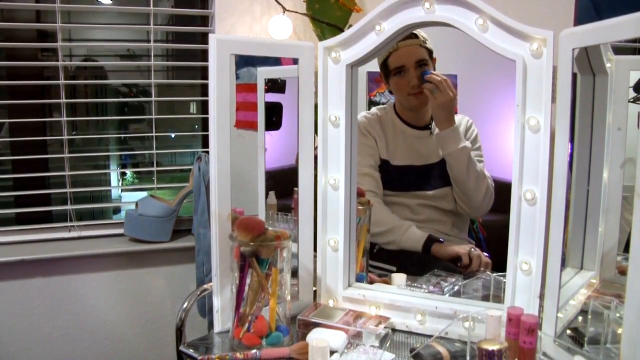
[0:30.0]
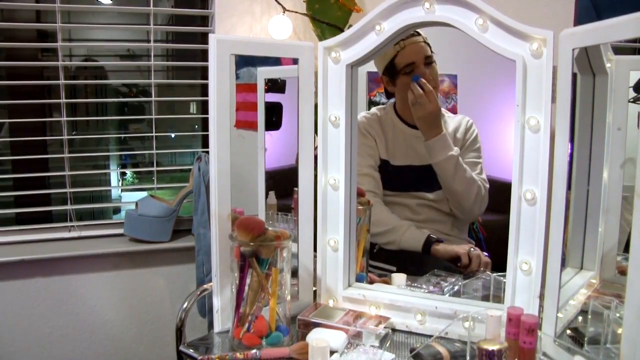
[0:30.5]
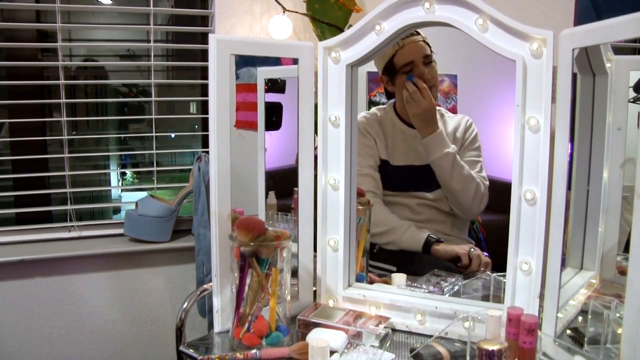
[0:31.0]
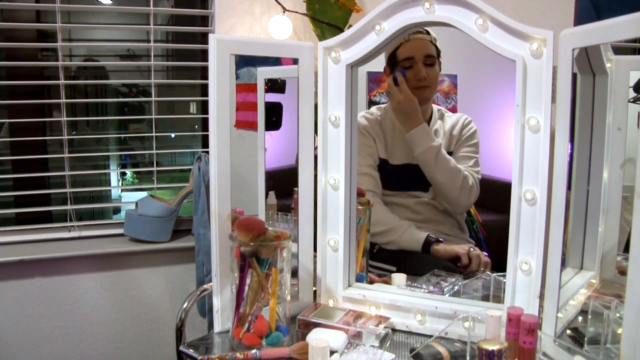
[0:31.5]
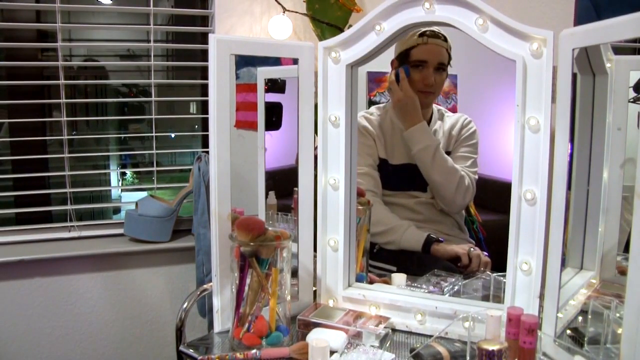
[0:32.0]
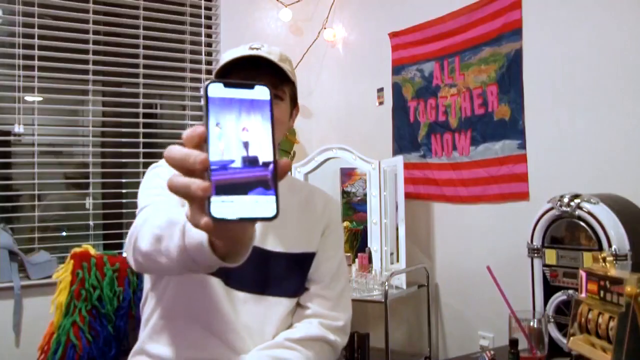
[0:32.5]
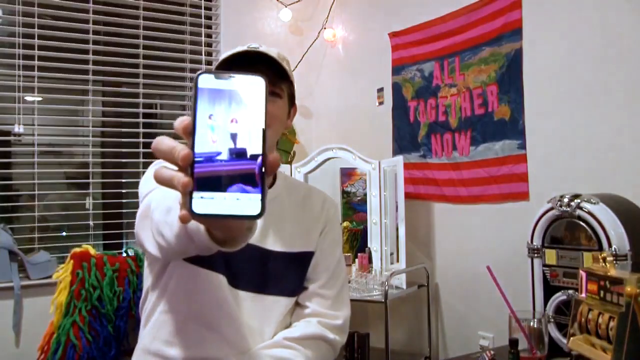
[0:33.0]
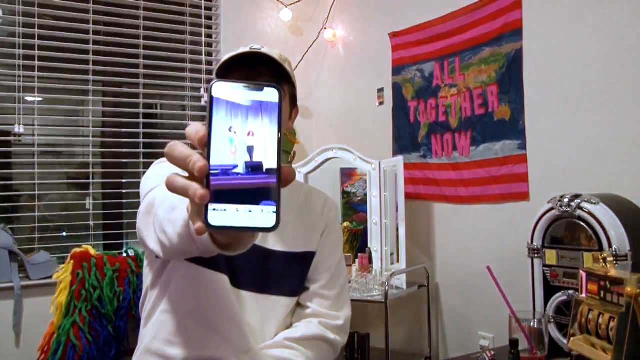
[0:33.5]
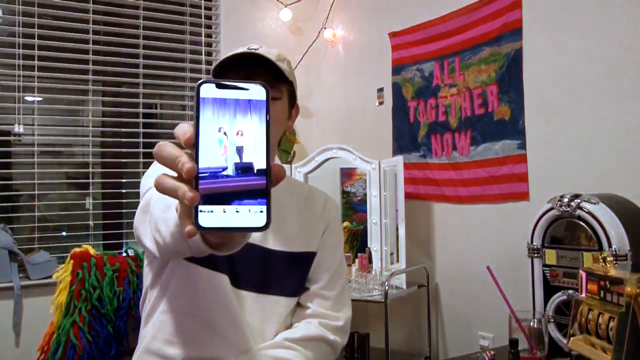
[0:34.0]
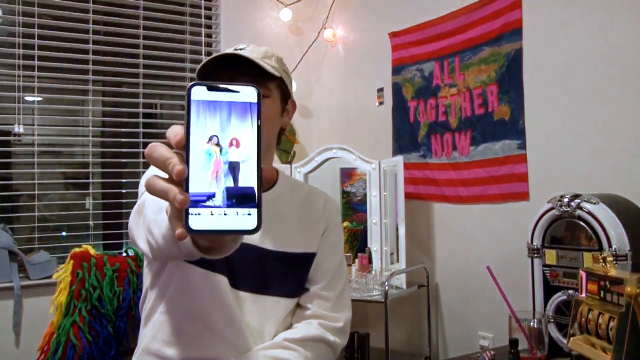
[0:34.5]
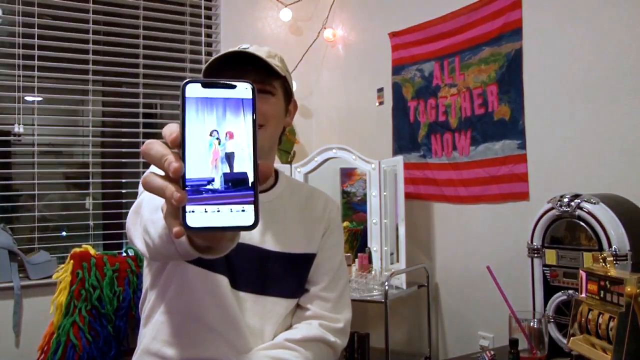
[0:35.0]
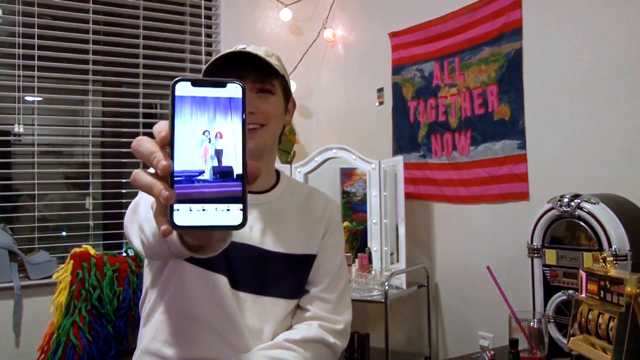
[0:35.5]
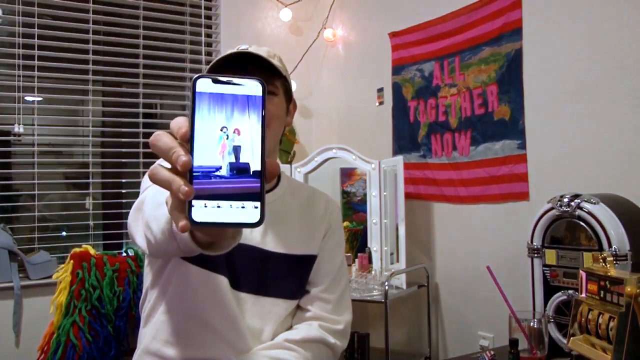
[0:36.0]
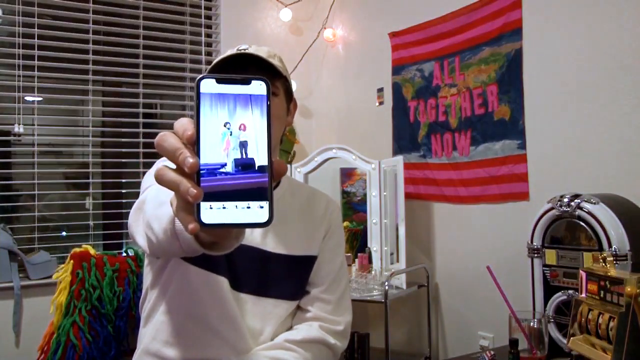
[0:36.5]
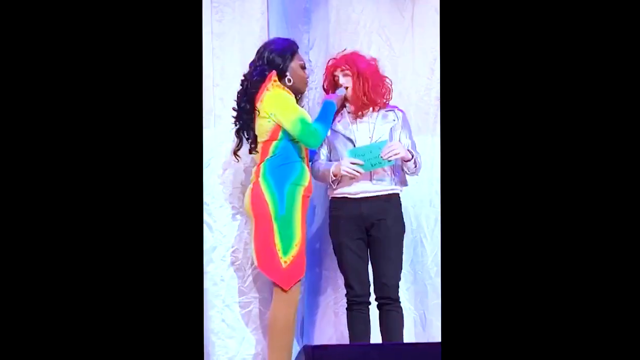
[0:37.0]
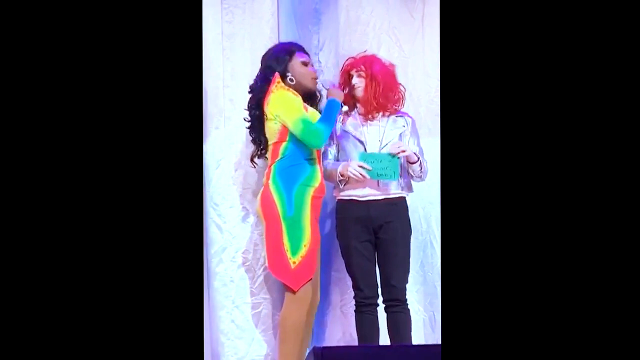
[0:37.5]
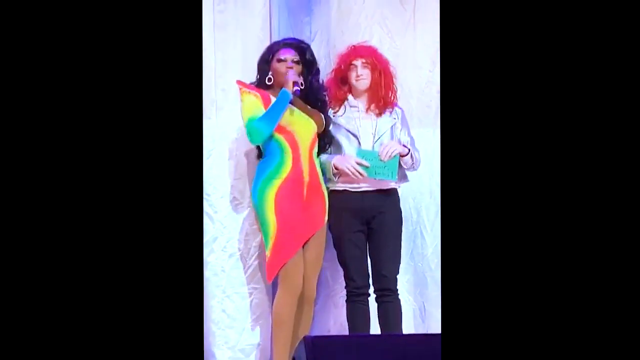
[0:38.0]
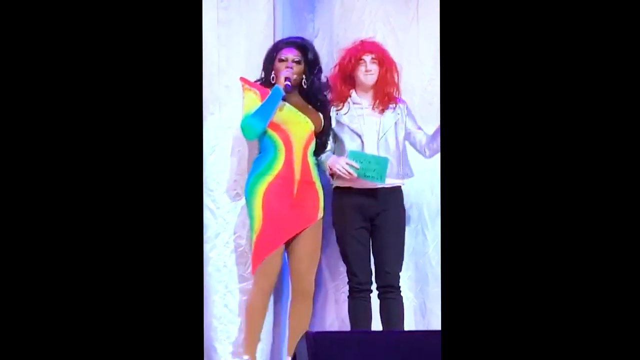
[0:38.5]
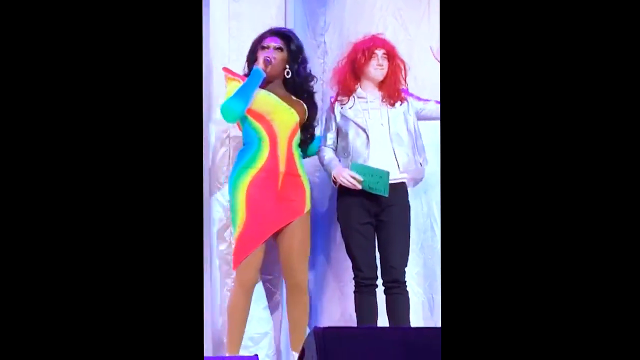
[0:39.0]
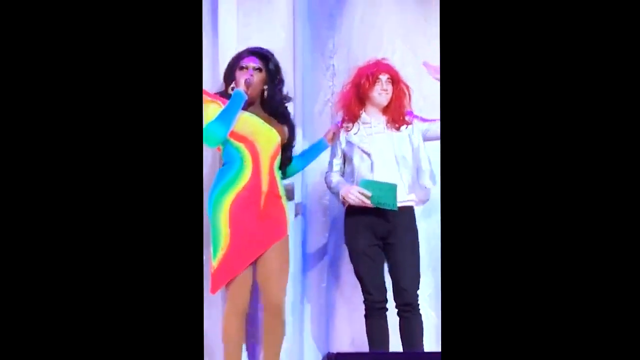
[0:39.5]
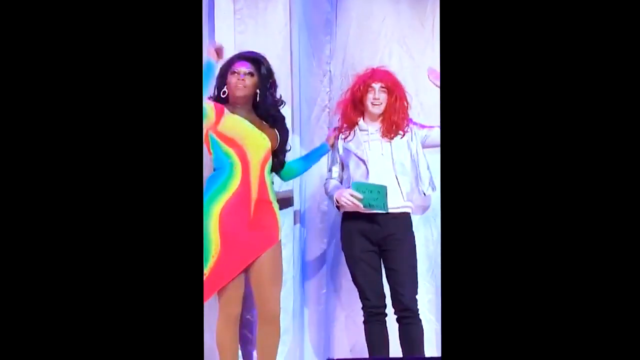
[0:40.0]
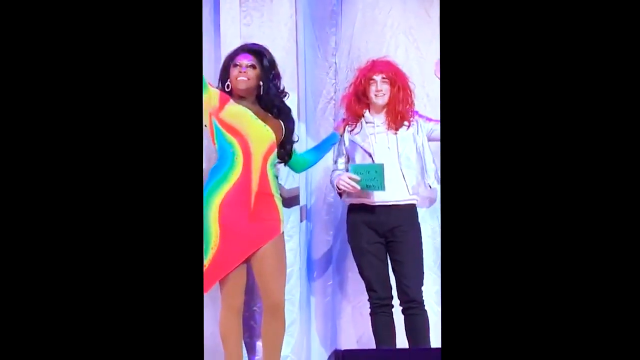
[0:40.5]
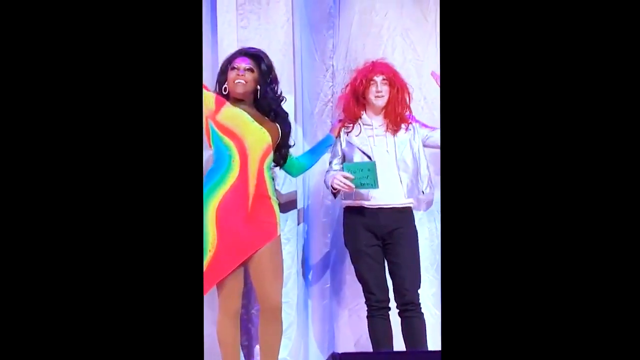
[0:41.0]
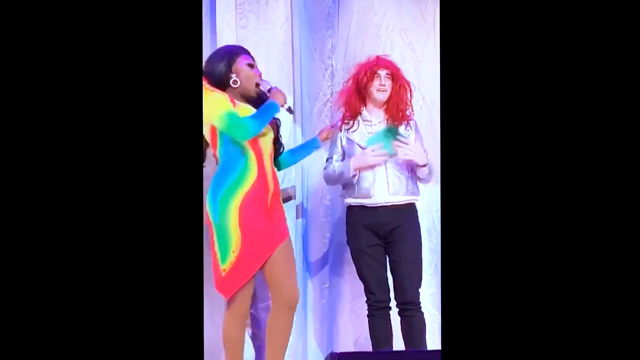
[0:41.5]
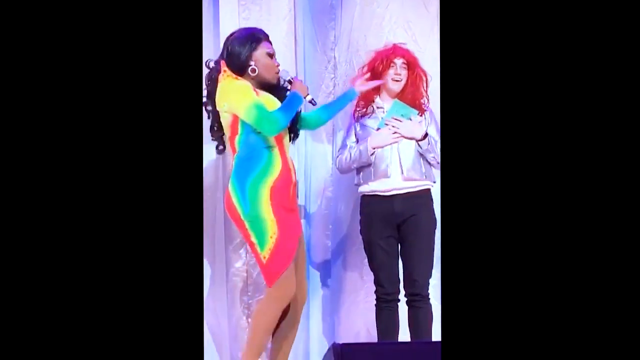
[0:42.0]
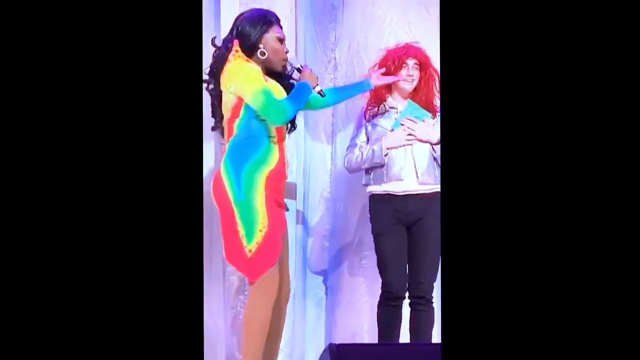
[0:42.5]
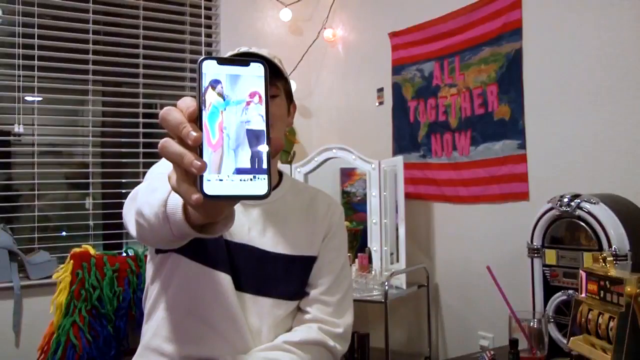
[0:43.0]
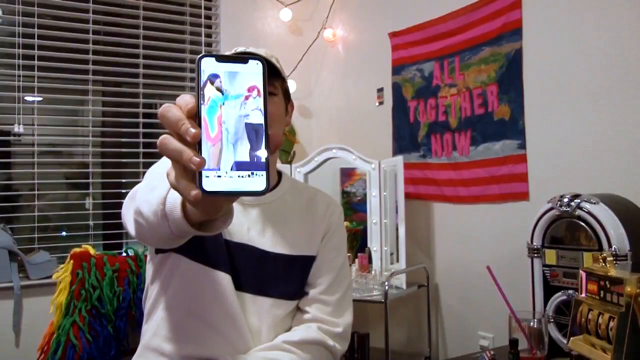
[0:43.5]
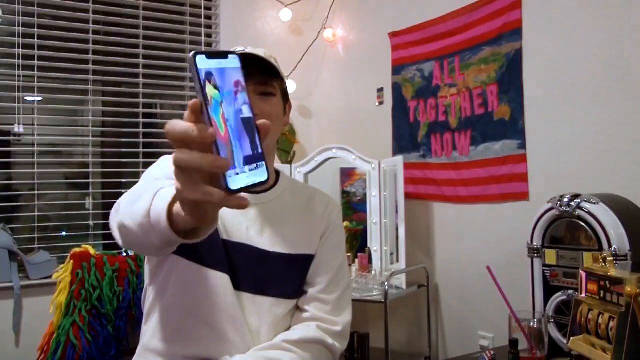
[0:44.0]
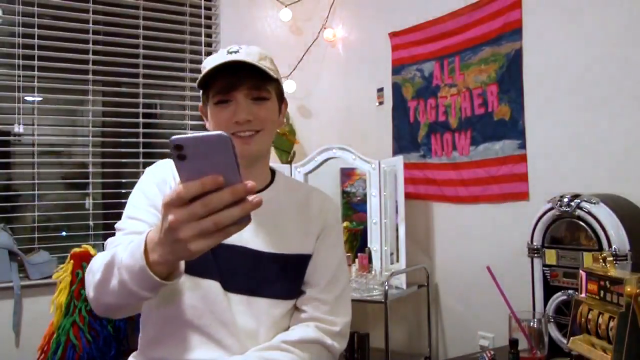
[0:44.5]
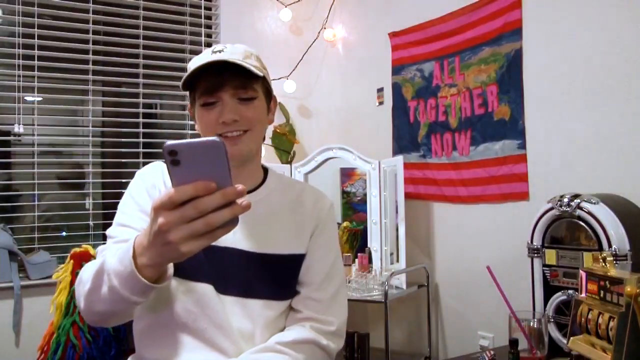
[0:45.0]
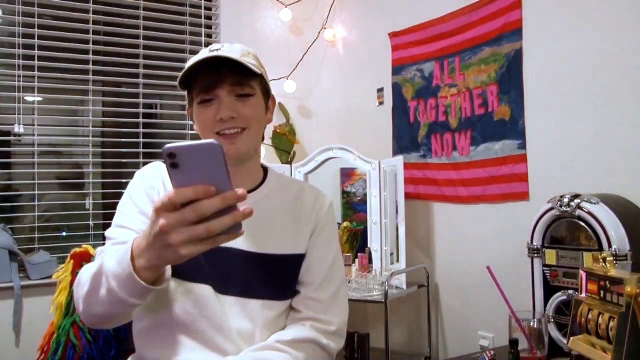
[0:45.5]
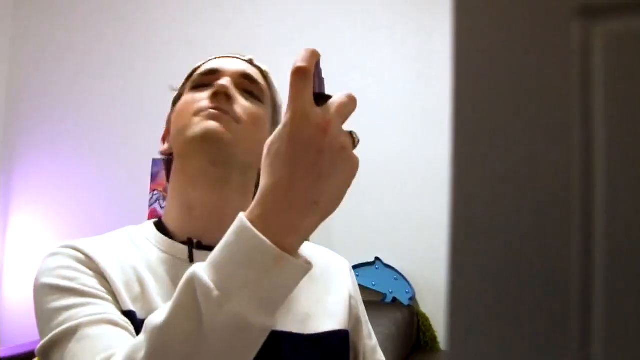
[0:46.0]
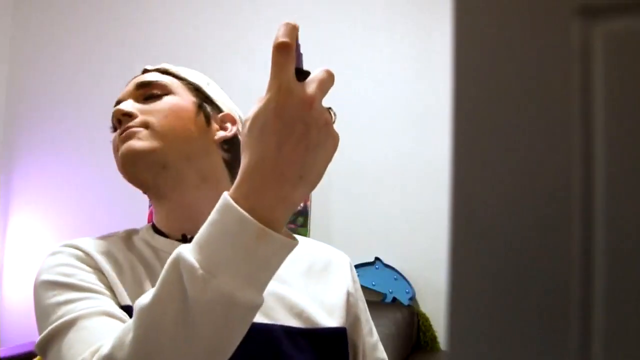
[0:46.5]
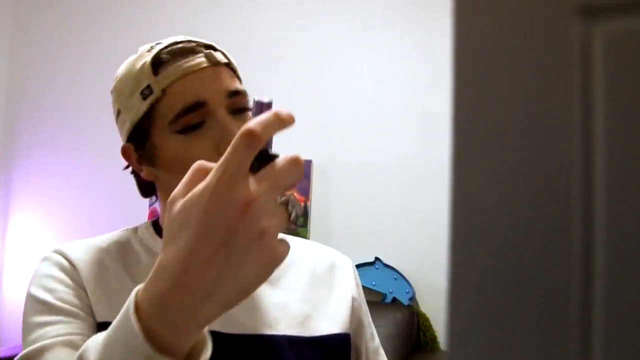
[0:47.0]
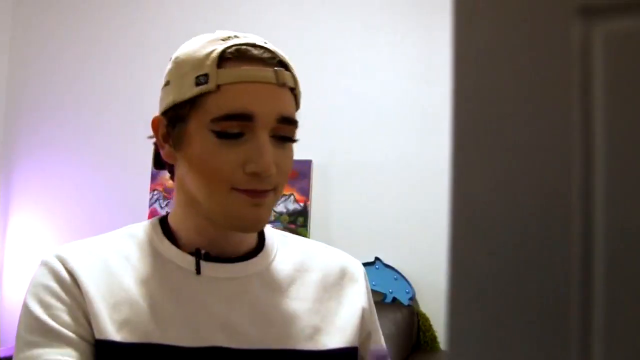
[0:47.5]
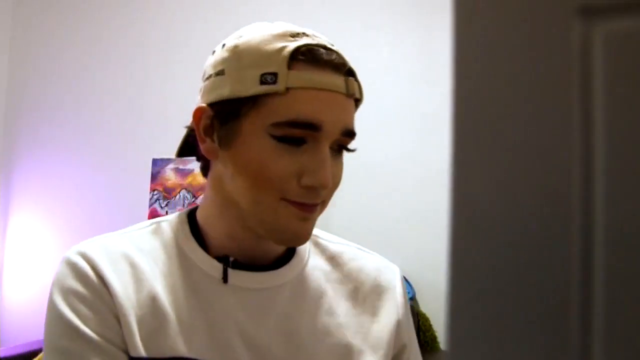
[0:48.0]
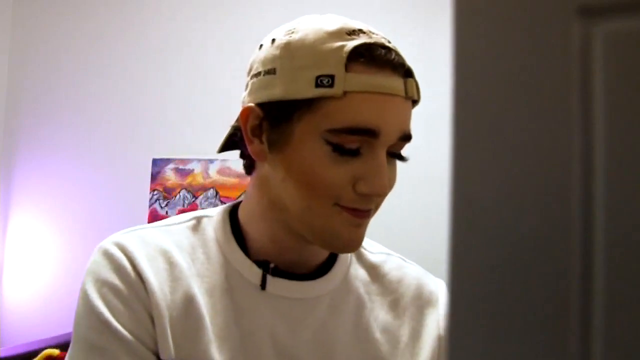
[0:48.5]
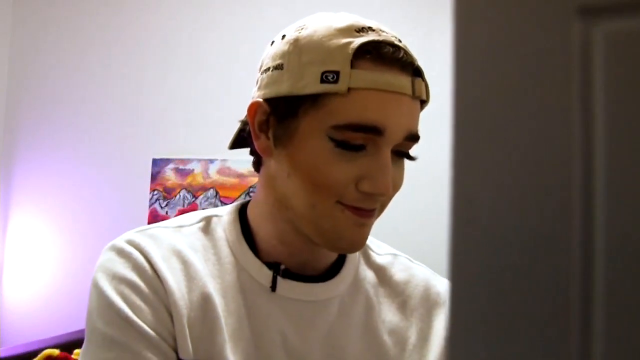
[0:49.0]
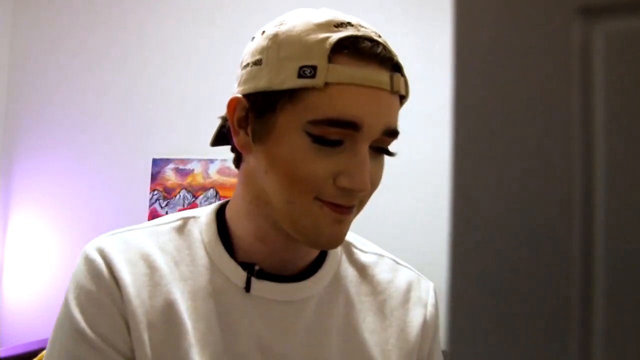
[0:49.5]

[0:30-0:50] Using the same left hand, the person dabs foundation onto their right cheek. Next, the same mirror is in the background and the person now sits in front of it. A jukebox is on the right-hand side, and on the wall to the right of the person is an image of a map with "all together now" written over it. The person holds their phone up in their right hand with the screen facing the camera, and there seems to be a drag show playing on it. The view zooms in on this video, showing two people: on the left, a Black woman with dark hair in a very colourful yellow, red and green dress, and next to her a person in a red wig with a card in front of them, as though presenting something. The person turns the phone back toward themselves. A close-up then shows them spraying something onto their face; they are smiling and very happy.